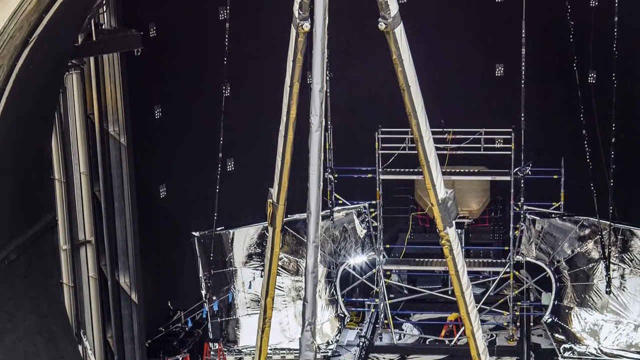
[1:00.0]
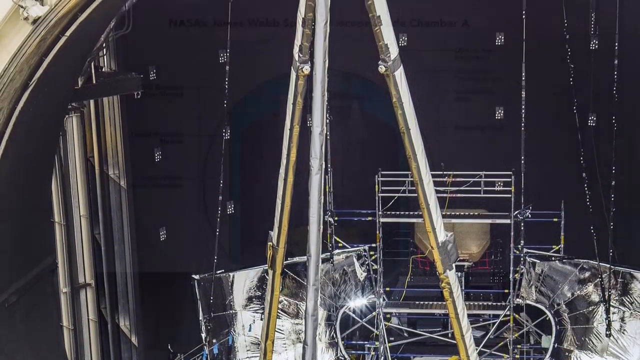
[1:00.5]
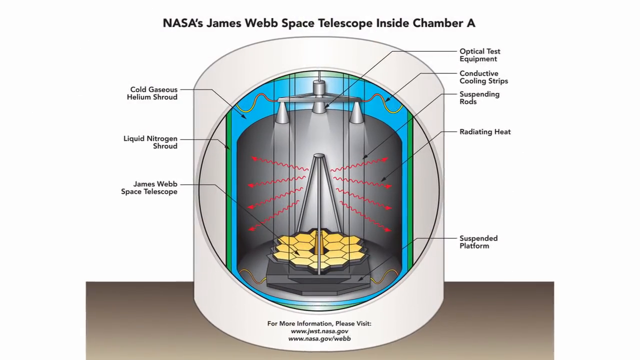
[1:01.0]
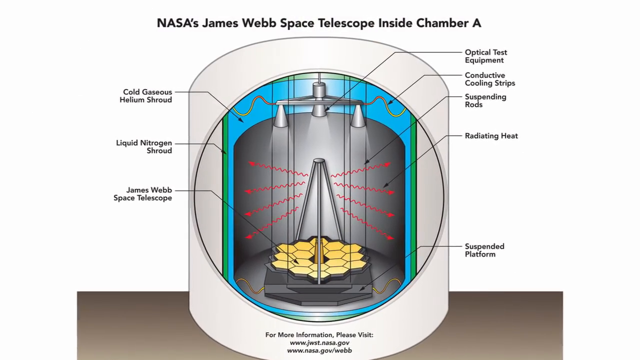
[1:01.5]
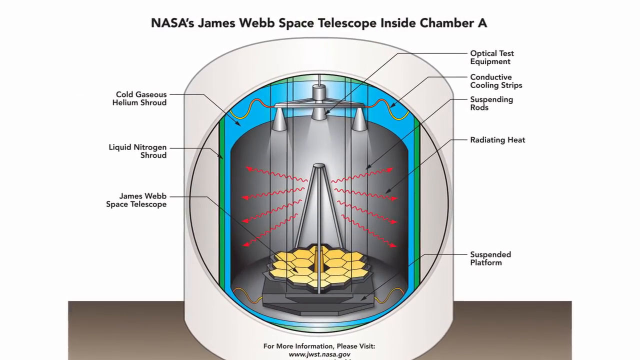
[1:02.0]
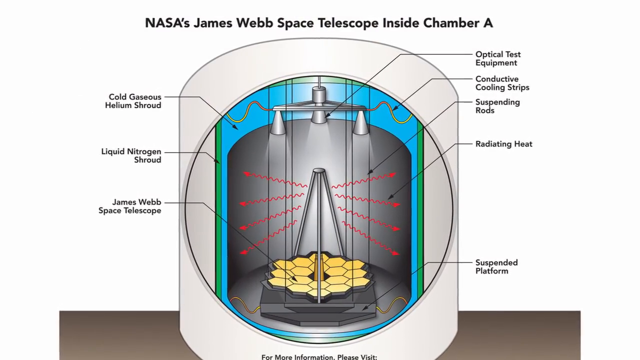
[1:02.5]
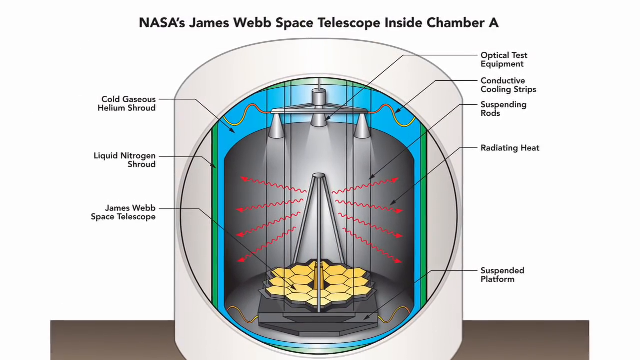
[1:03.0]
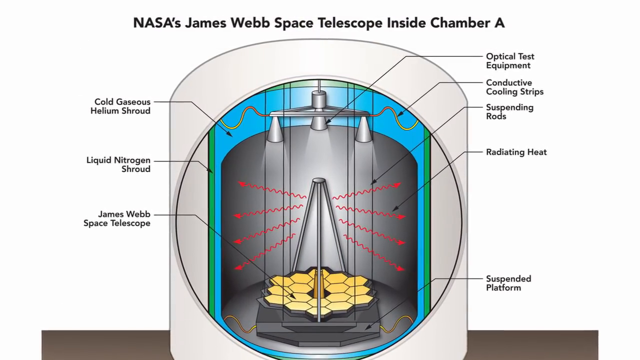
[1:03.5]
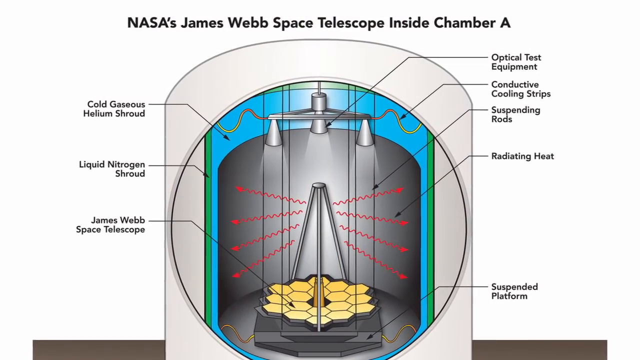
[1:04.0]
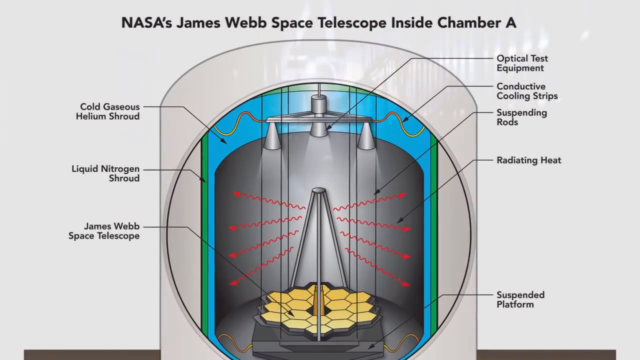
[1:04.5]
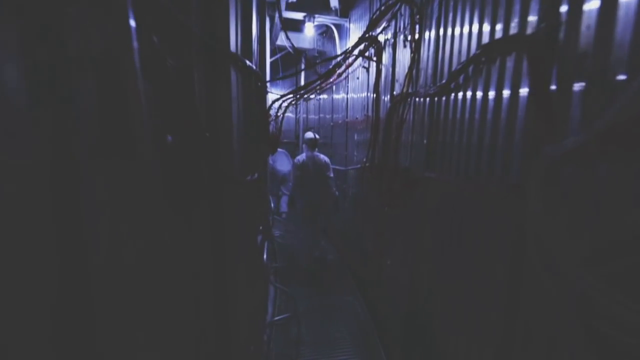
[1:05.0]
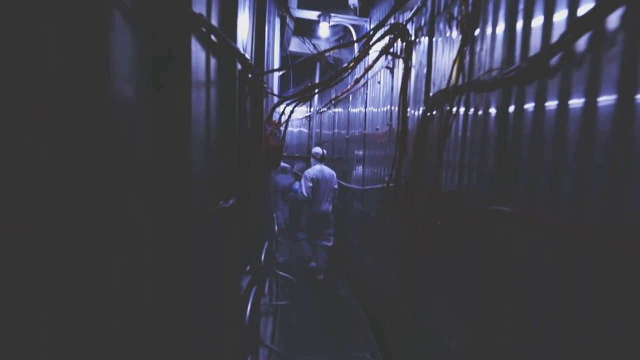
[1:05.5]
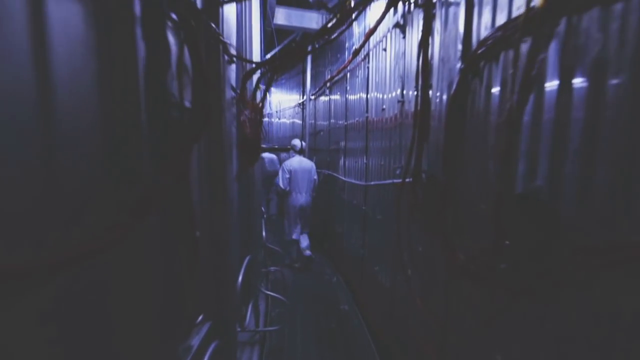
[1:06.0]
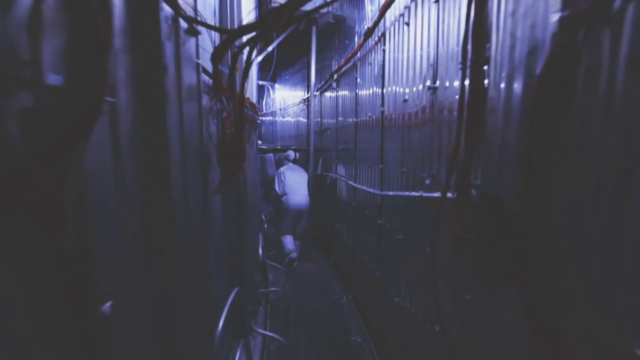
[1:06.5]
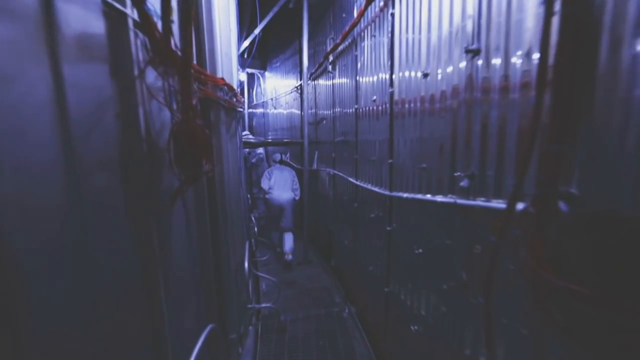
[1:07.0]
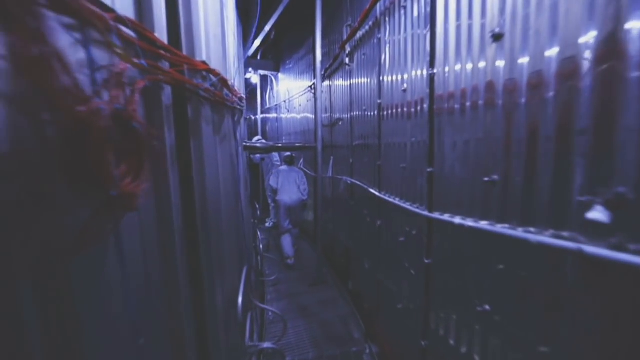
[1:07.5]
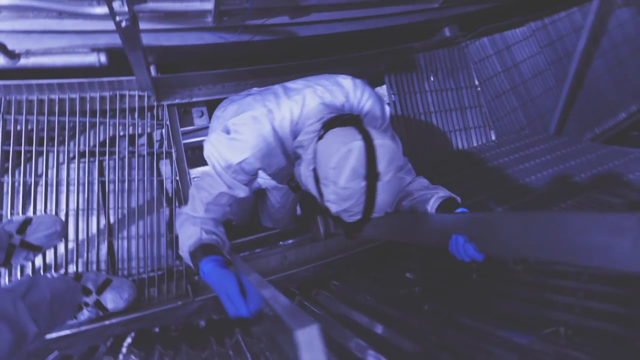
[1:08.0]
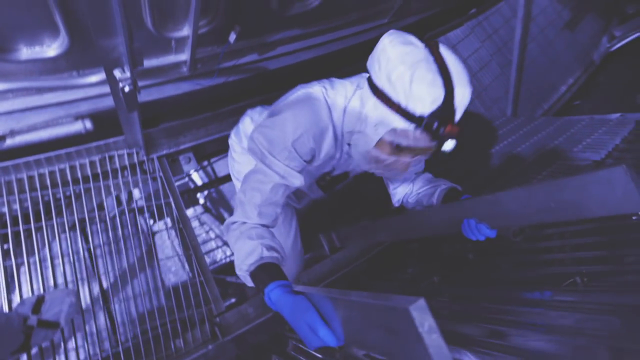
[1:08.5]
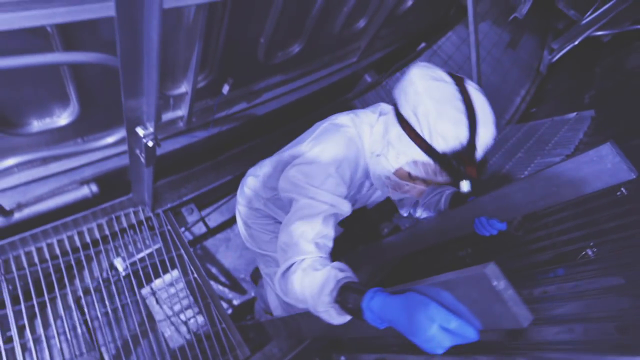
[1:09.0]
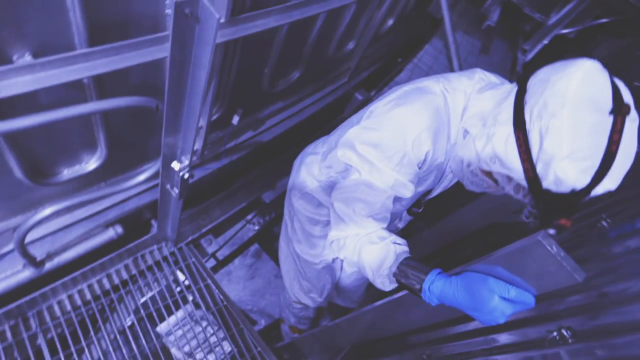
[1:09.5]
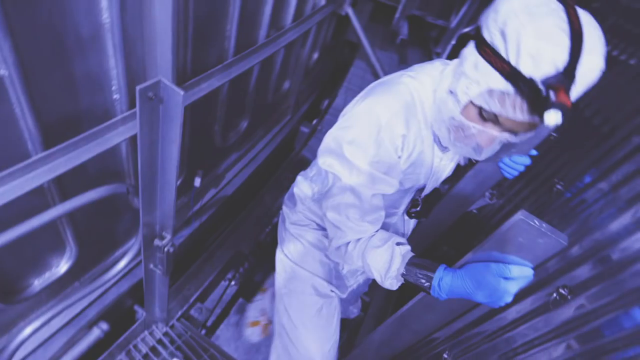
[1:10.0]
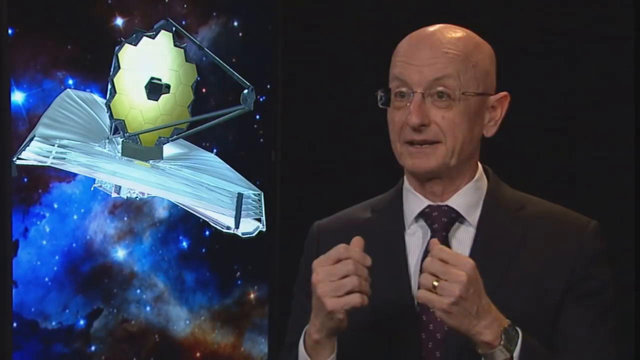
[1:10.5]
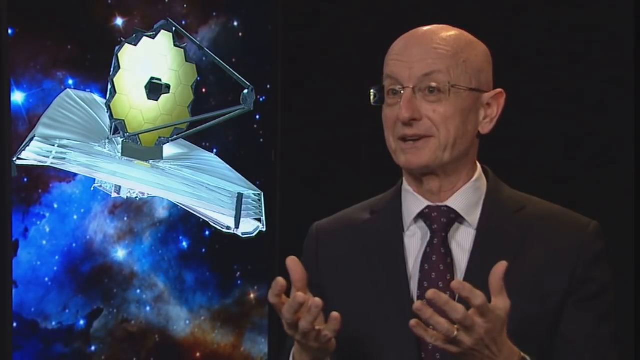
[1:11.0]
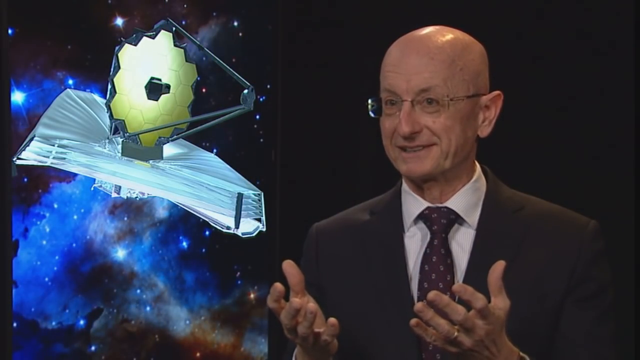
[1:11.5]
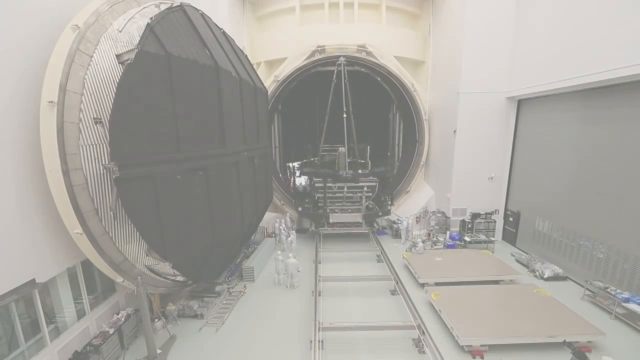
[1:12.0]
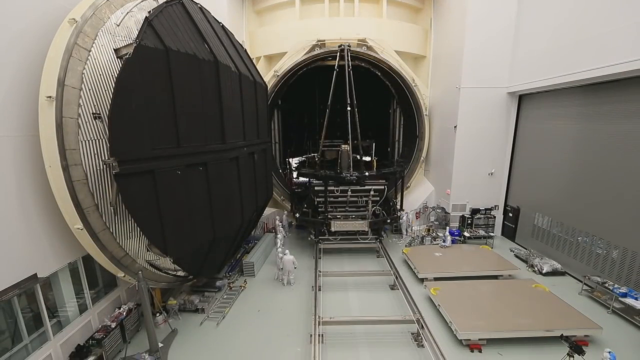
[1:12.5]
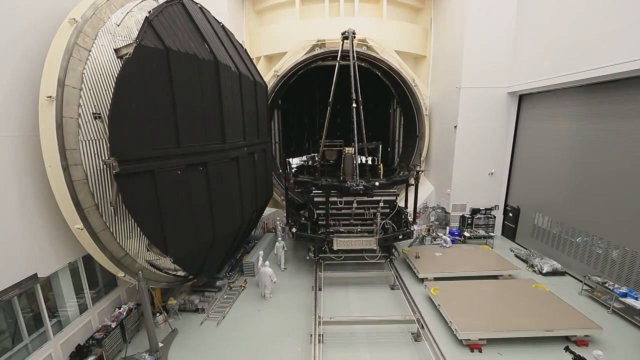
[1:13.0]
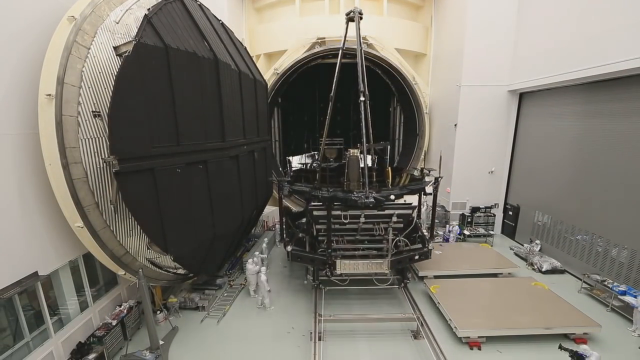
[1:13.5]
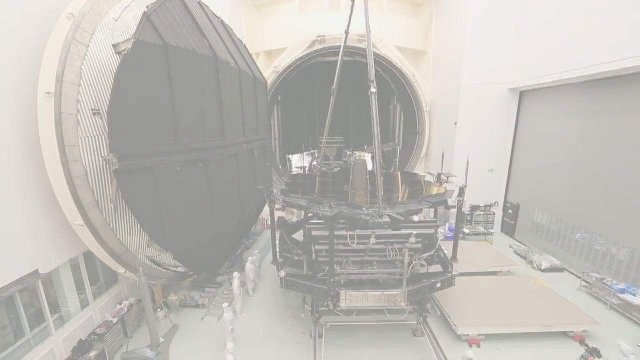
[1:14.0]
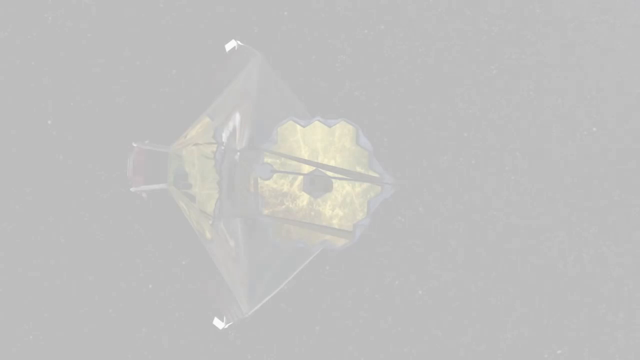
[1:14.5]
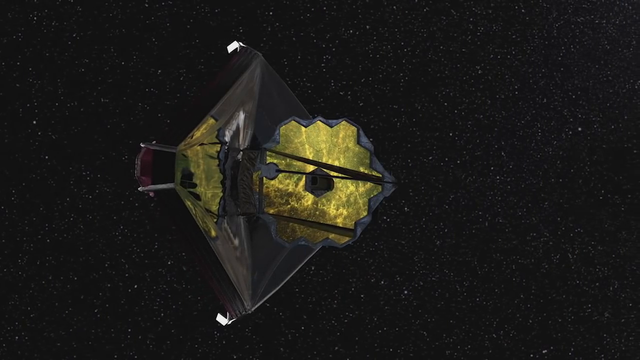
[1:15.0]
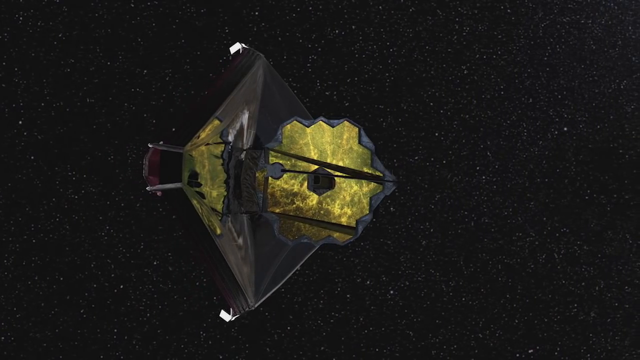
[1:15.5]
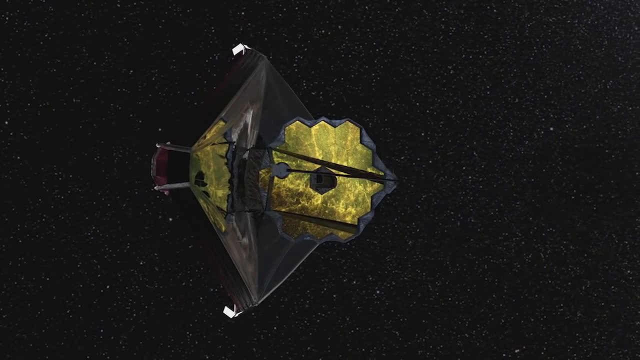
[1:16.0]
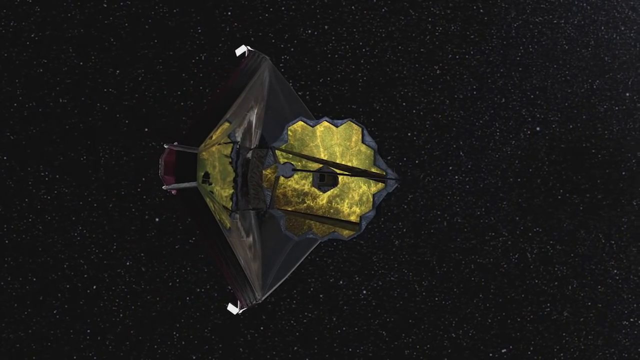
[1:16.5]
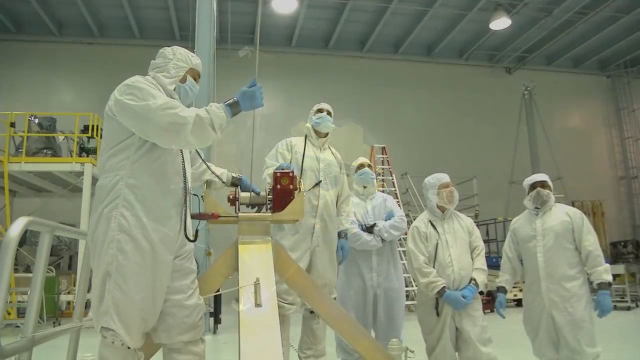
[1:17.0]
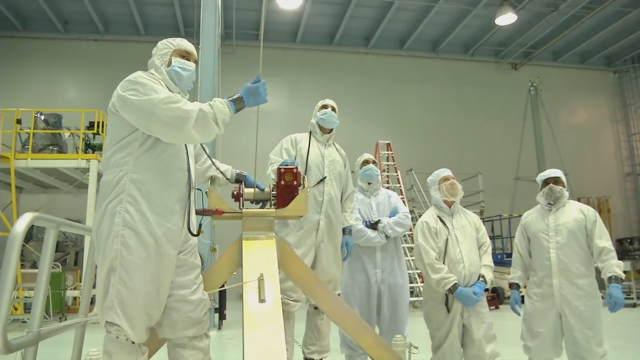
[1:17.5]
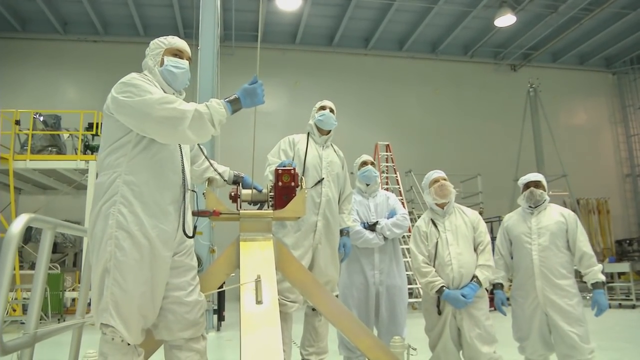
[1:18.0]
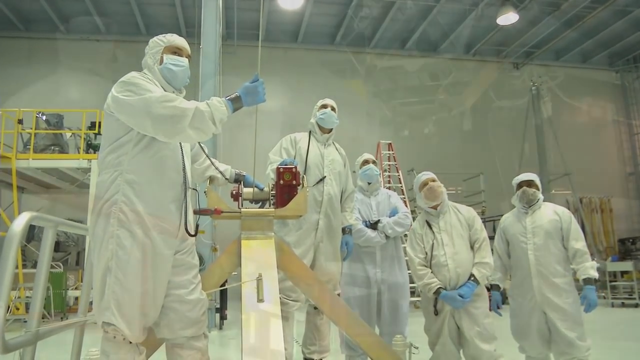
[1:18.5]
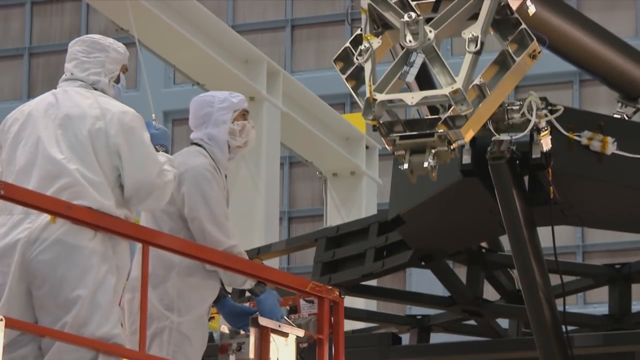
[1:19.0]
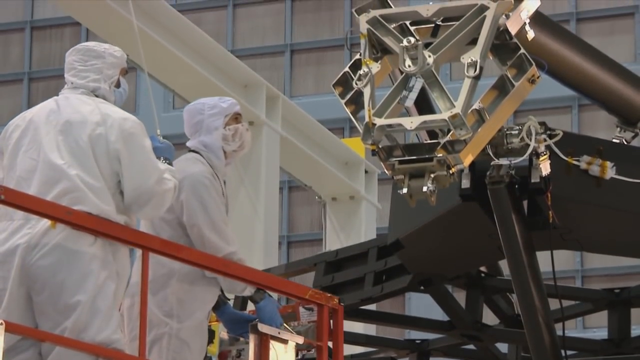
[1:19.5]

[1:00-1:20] A diagram labeled "NASA's James Webb Space Telescope Inside Chamber A" lists the parts of the telescope. The video then shows people walking through a corridor and climbing up a ladder of a metal structure used for outer space. Next comes an image of the telescope with the pentagon-shaped items on the inside and the diamond-shaped structure on the outside. People dressed in full-body white protective gear, face masks, and blue gloves work on the telescope. Finally, two people in full-body protective gear ride a red platform up close to the telescope.